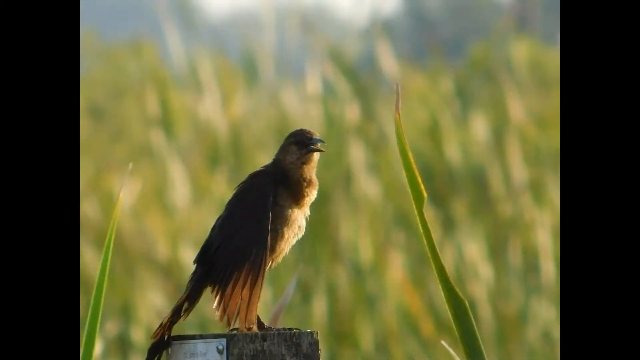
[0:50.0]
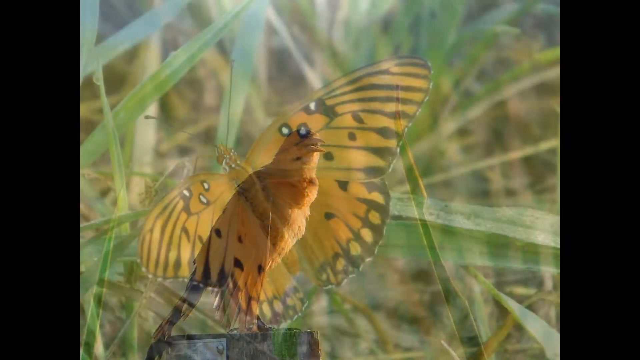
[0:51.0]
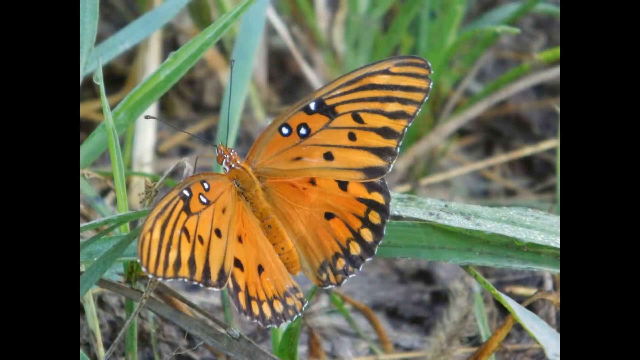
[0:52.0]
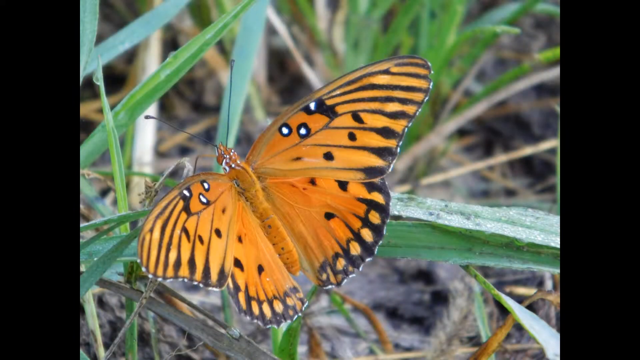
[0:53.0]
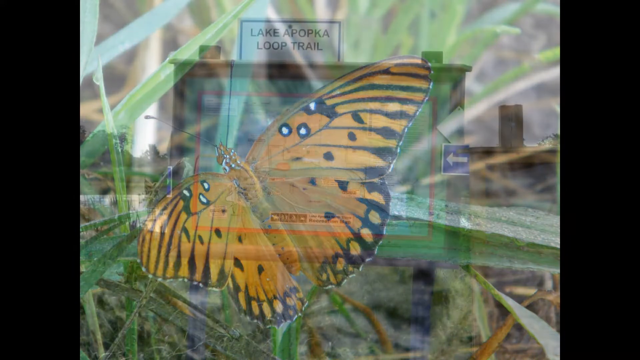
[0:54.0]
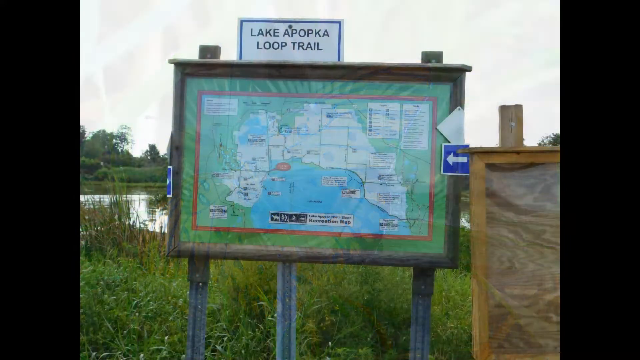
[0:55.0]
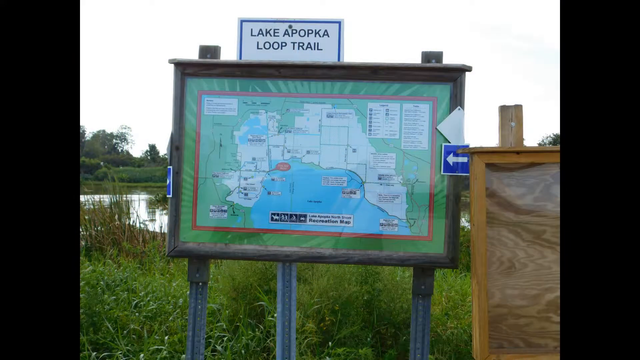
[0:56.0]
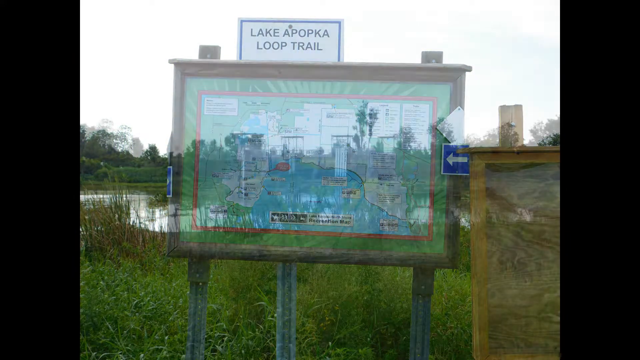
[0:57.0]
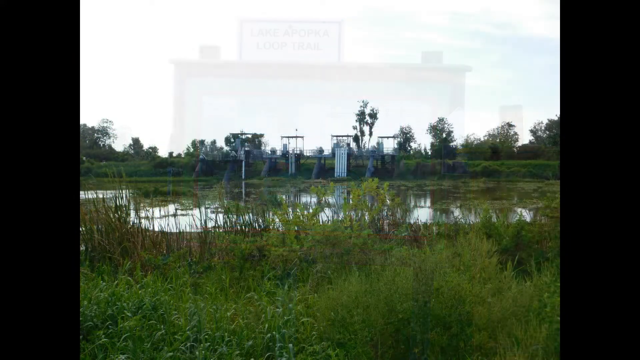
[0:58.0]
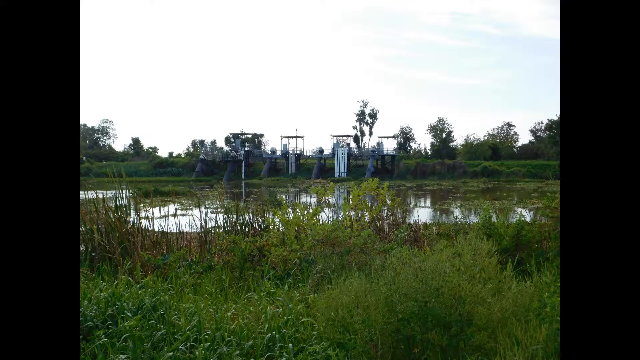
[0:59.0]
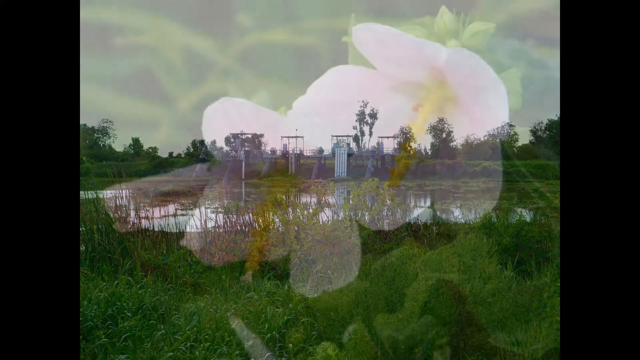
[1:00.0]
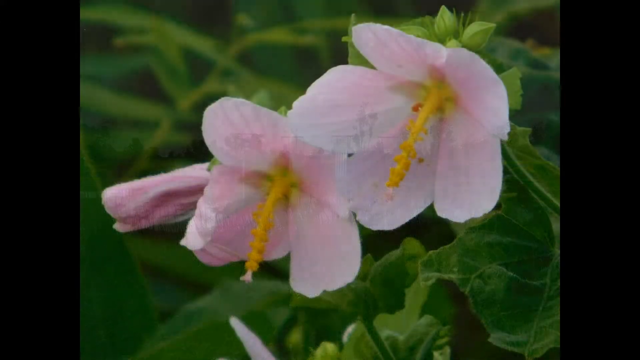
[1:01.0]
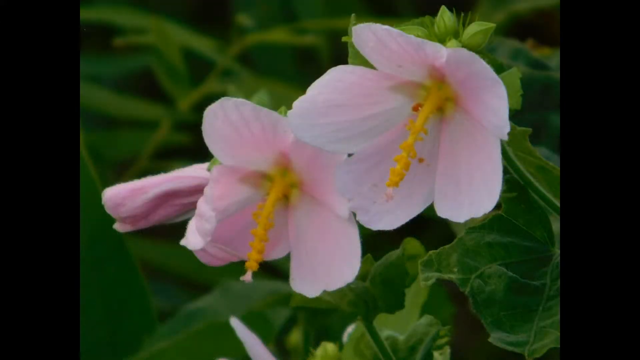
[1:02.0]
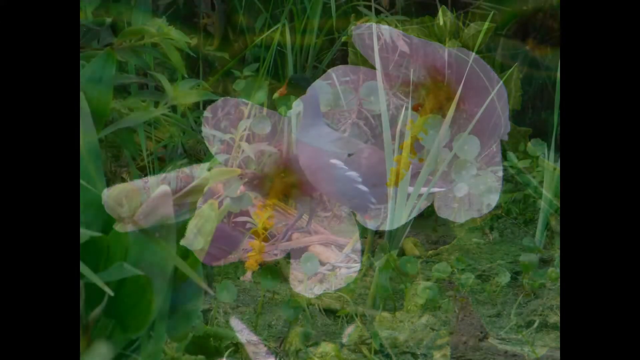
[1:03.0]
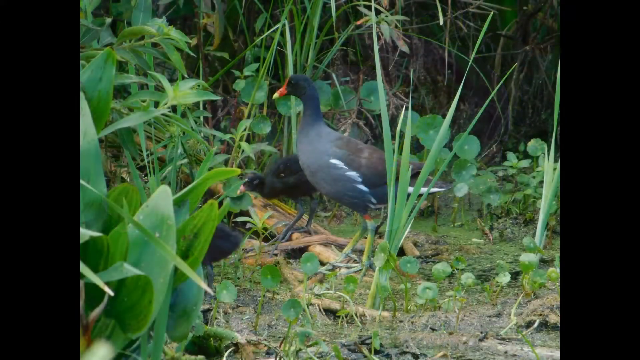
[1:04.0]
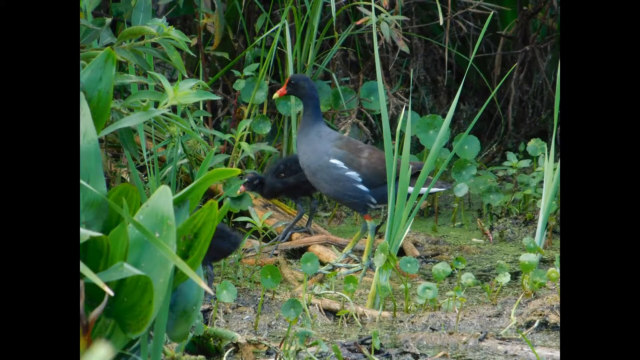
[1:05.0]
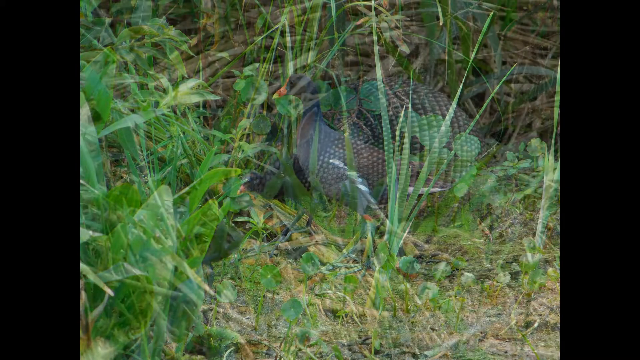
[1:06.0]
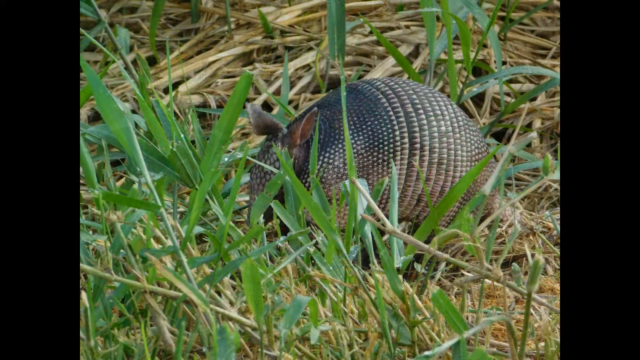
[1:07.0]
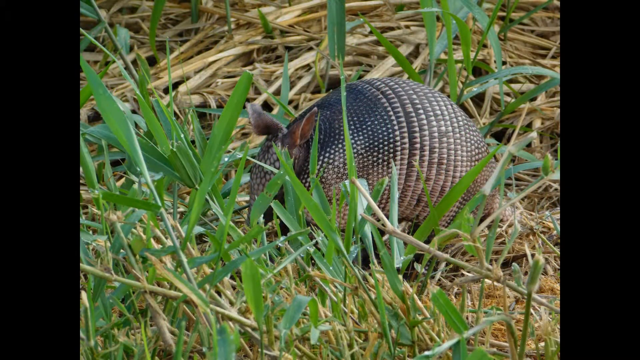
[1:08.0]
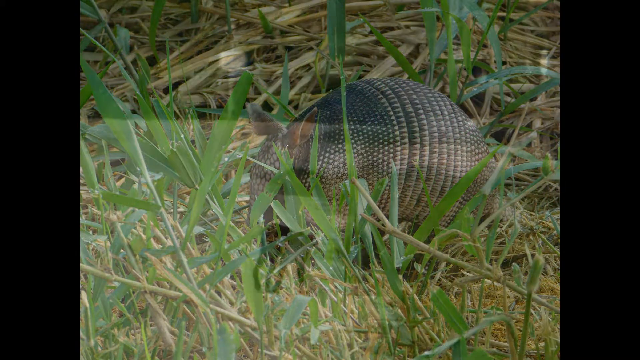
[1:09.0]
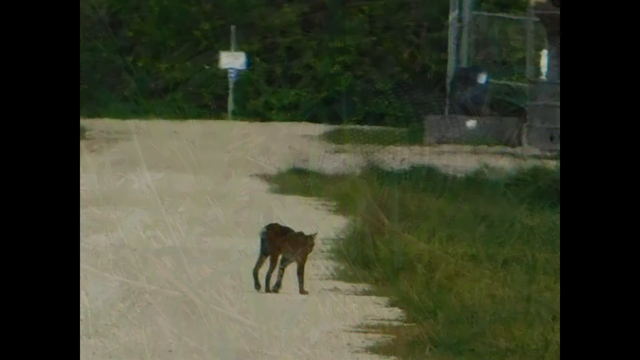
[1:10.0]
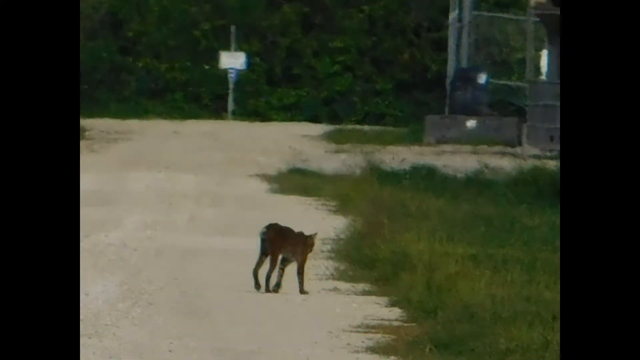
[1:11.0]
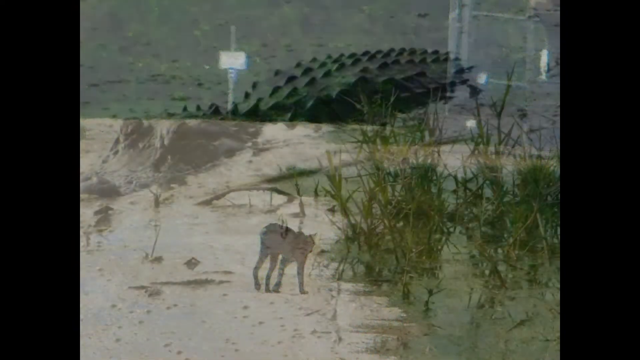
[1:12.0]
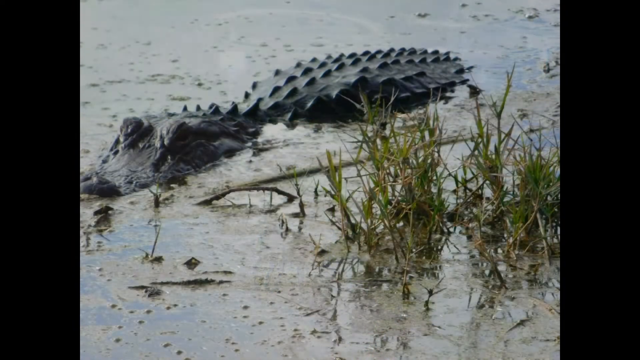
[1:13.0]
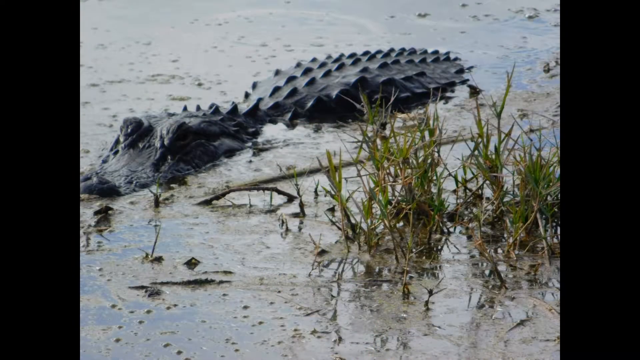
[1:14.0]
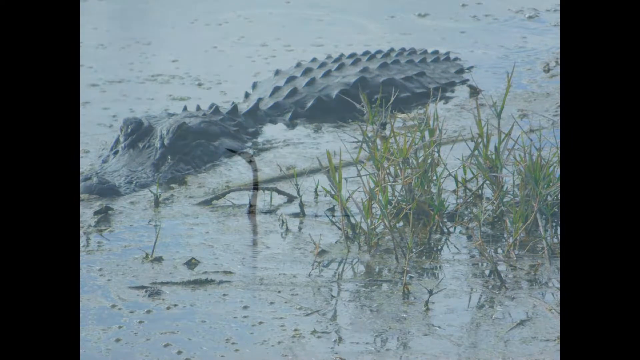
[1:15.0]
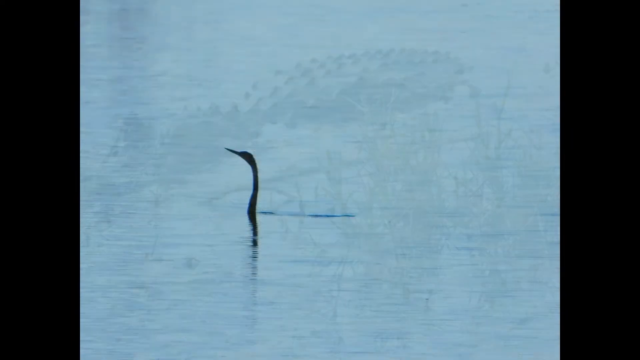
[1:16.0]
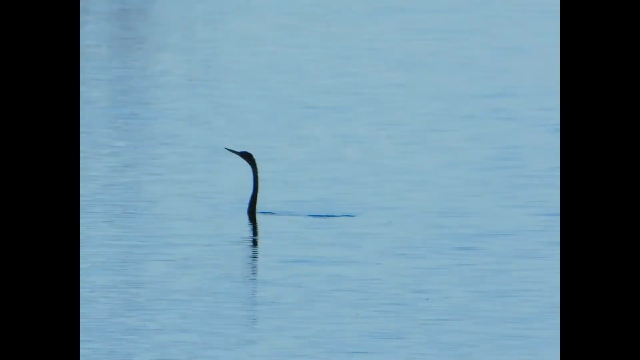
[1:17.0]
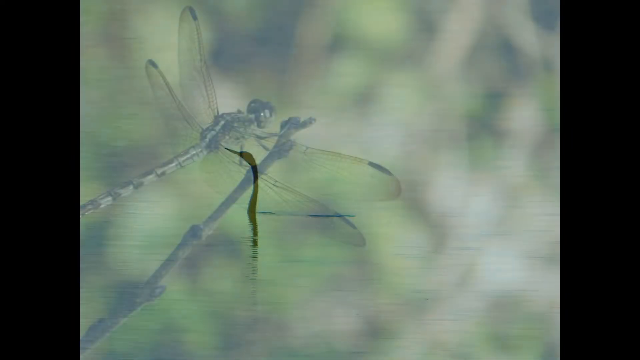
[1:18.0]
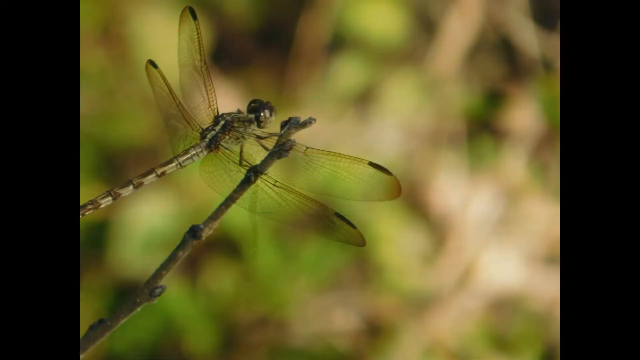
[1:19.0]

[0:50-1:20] Several different birds and animals appear. First is a brown bird with an open beak perched on a piece of greenery against a blurry green background. Next, a butterfly rests among green blades of grass; it is primarily orange, with black antennae, several black spots on its wings, and black spots with white centers near the edges of its wings. A trailhead sign details the area with a map for hikers. Next is a marshy area with several tall stands in the background, then two pink flowers with yellow pistils. Dark-colored birds with orange beaks walk through a green area with lots of green leaves. A gray armadillo with little ears walks through the grass. Finally, a coyote walks down a road, with a white sign and some other materials in the background.